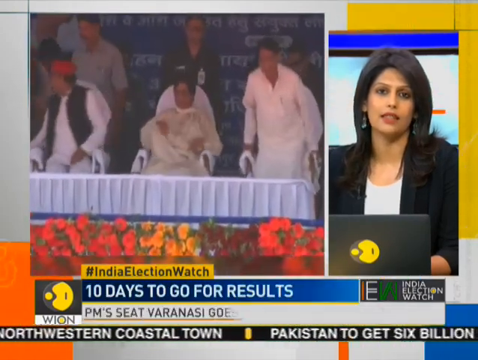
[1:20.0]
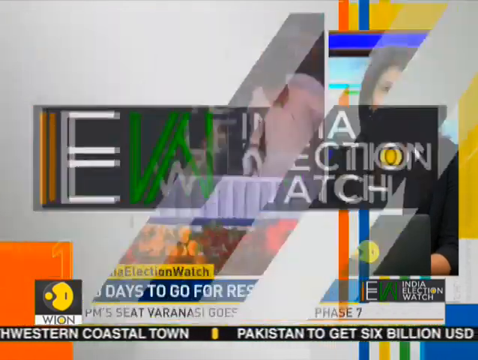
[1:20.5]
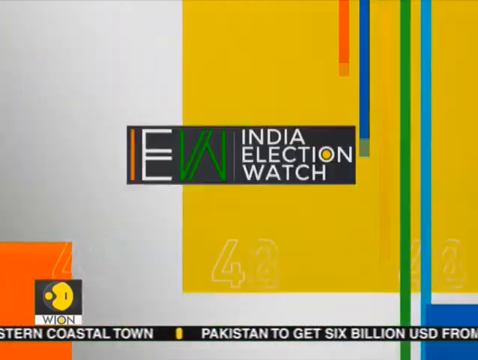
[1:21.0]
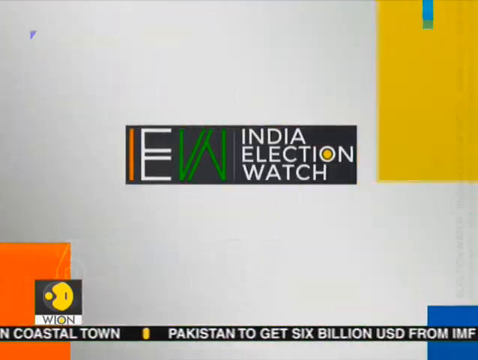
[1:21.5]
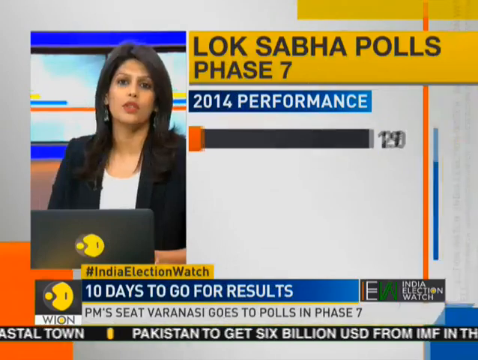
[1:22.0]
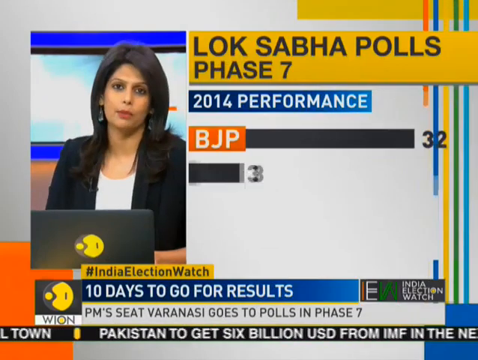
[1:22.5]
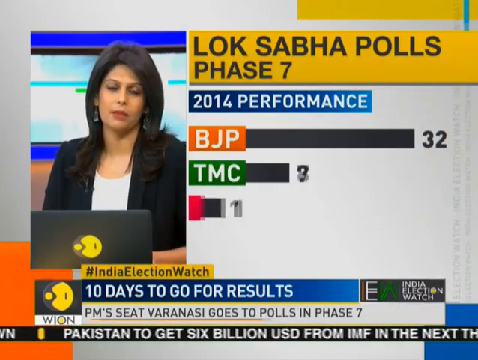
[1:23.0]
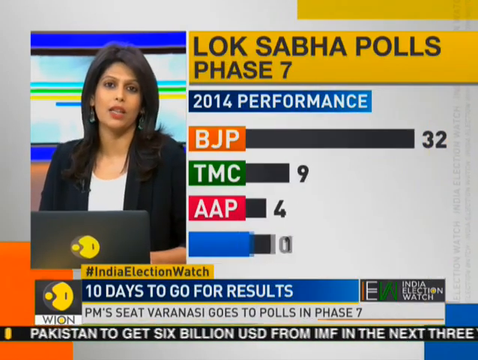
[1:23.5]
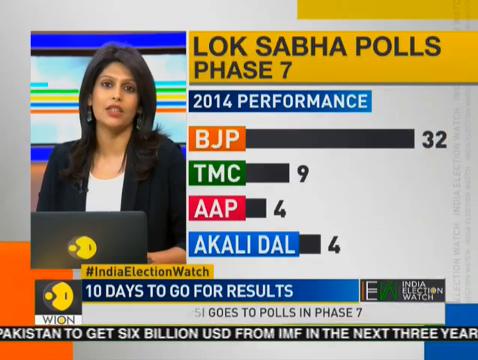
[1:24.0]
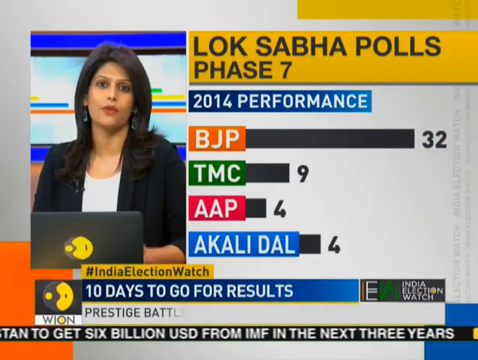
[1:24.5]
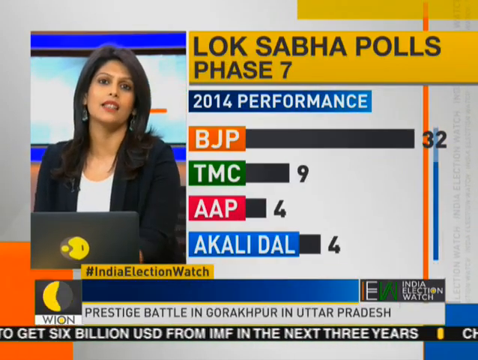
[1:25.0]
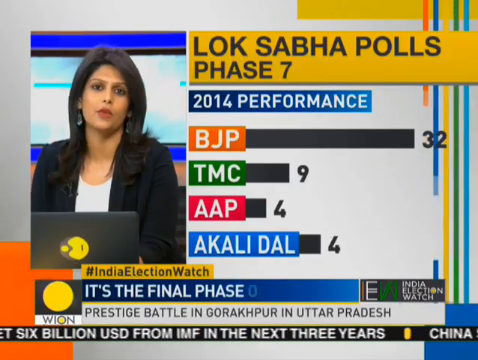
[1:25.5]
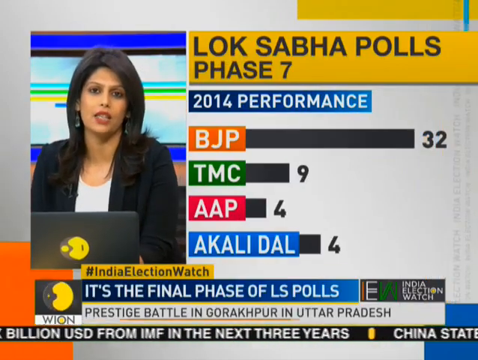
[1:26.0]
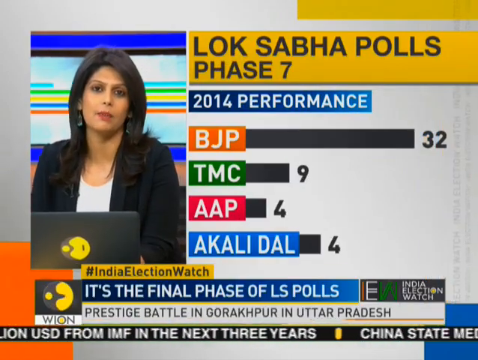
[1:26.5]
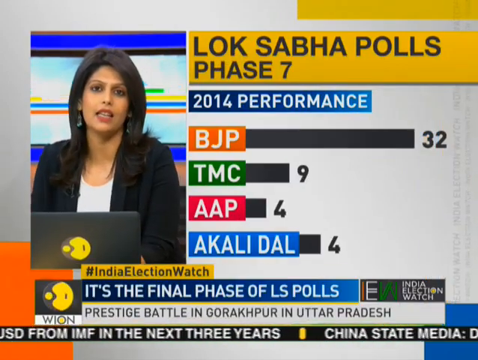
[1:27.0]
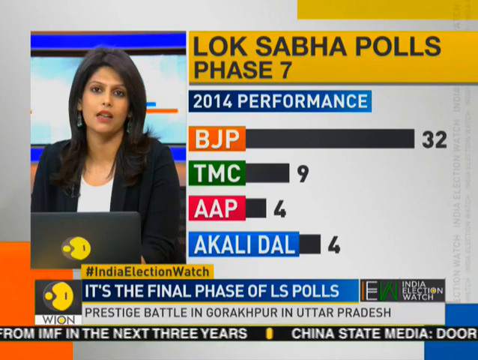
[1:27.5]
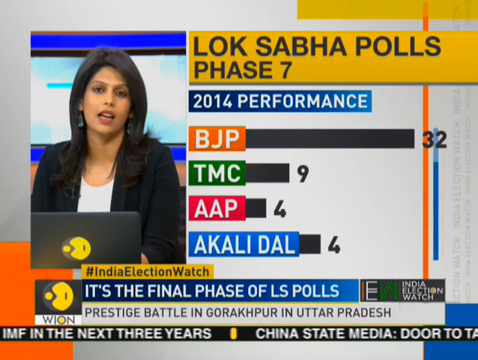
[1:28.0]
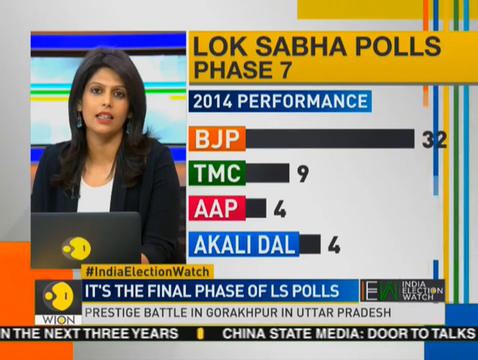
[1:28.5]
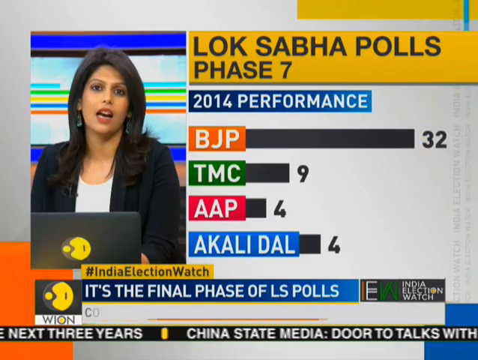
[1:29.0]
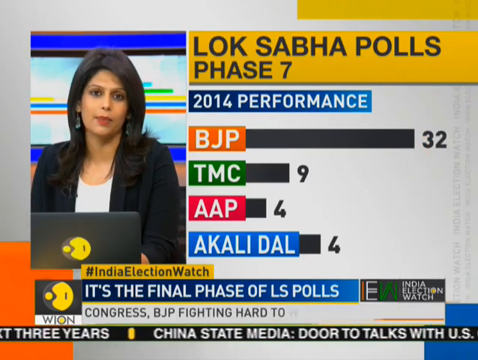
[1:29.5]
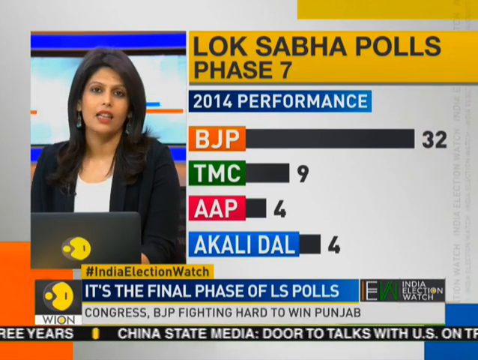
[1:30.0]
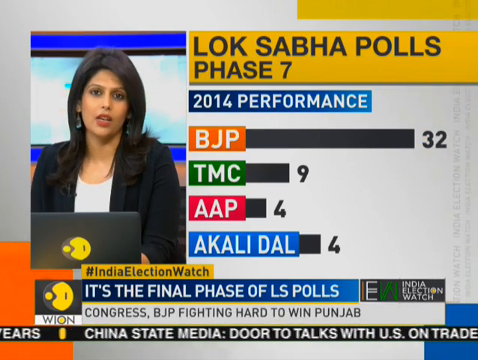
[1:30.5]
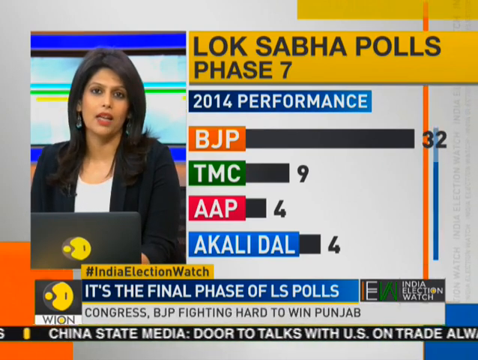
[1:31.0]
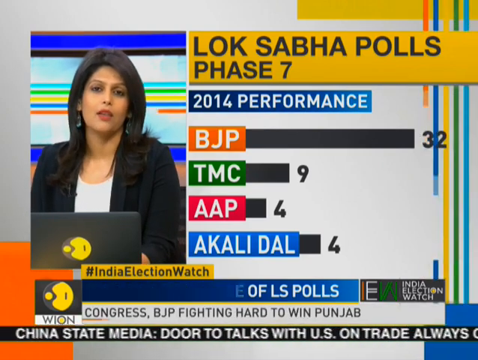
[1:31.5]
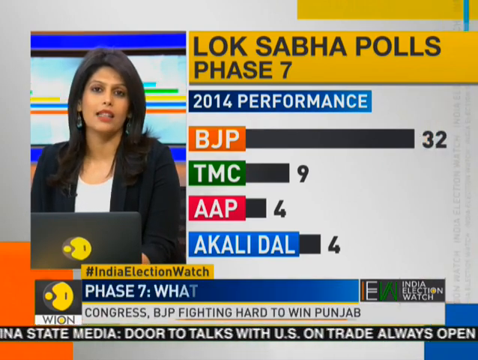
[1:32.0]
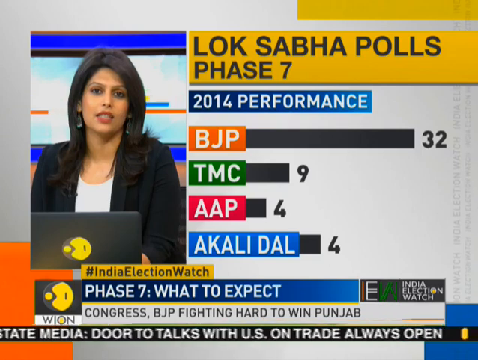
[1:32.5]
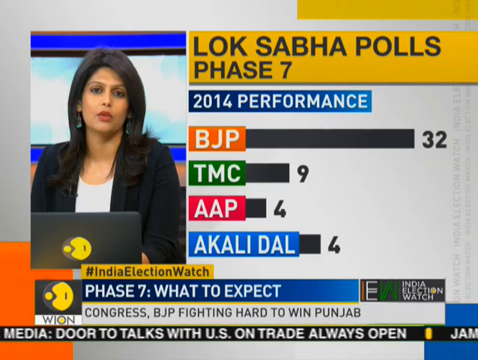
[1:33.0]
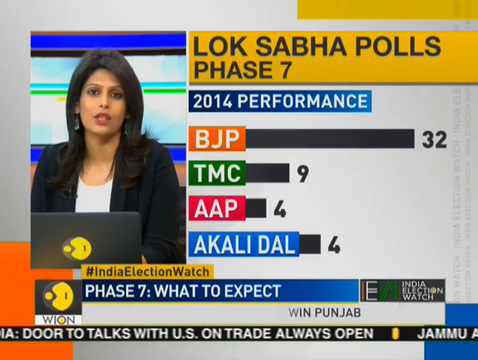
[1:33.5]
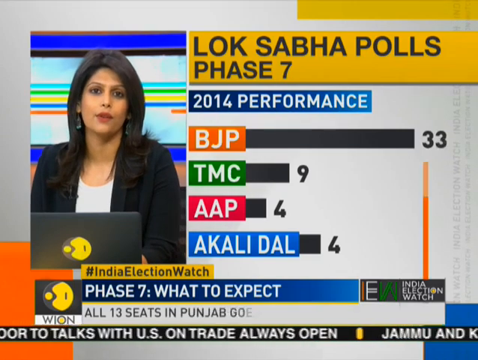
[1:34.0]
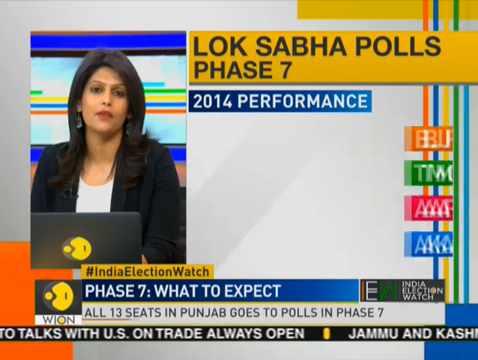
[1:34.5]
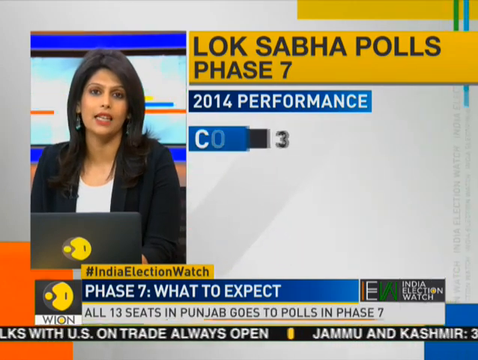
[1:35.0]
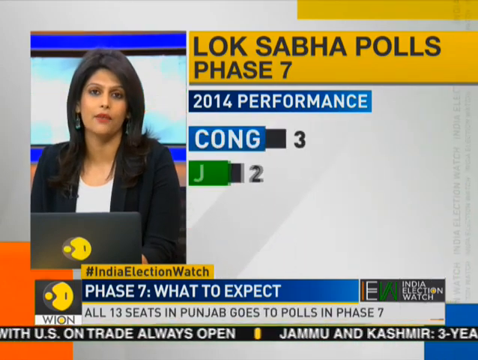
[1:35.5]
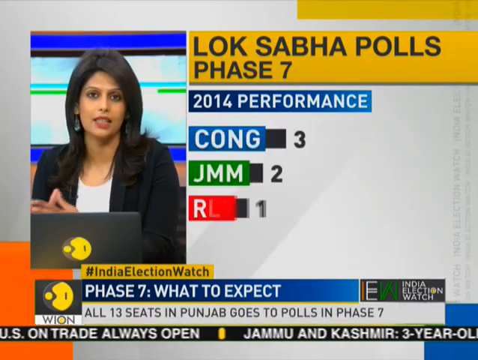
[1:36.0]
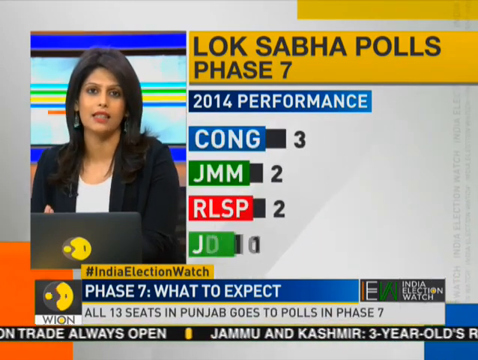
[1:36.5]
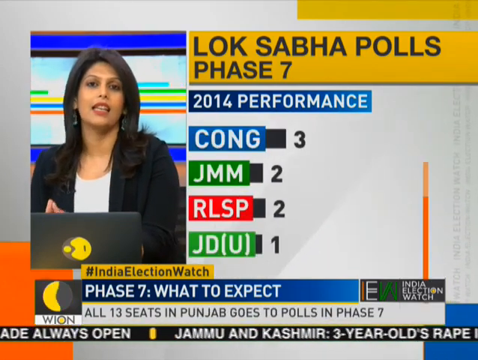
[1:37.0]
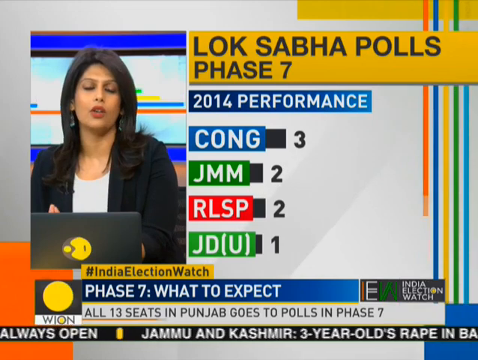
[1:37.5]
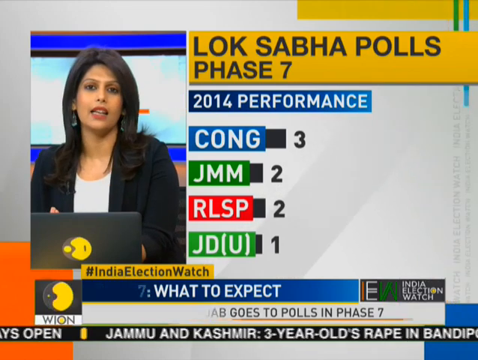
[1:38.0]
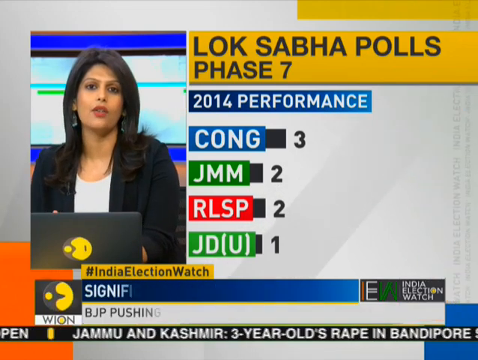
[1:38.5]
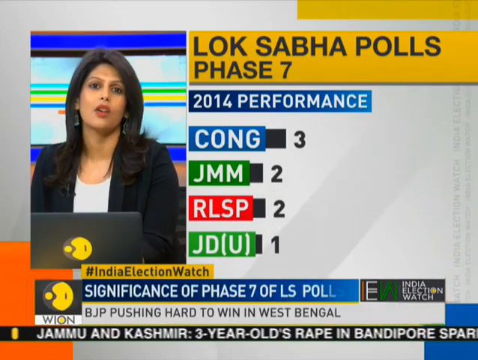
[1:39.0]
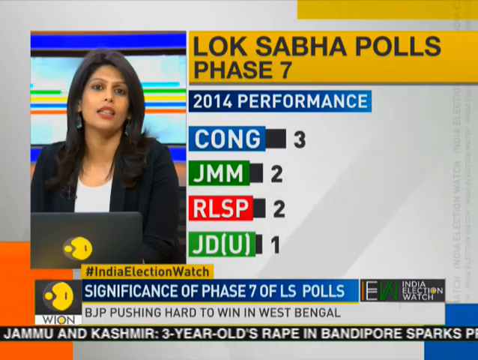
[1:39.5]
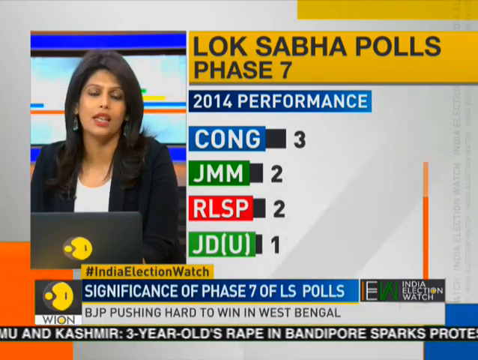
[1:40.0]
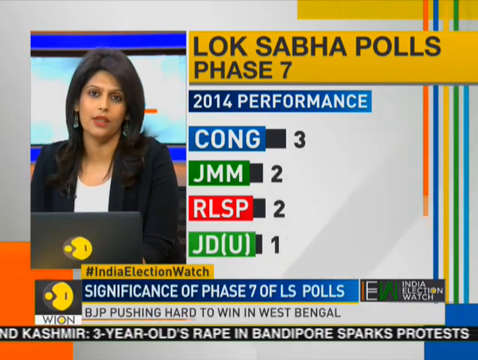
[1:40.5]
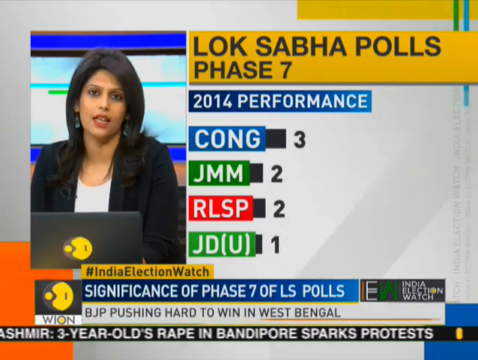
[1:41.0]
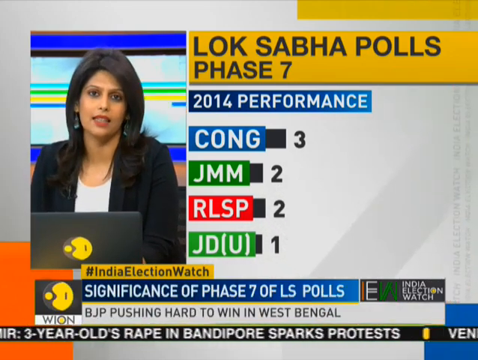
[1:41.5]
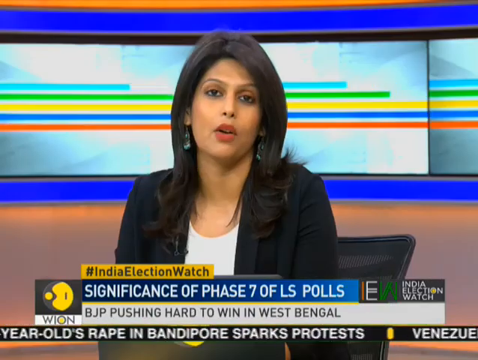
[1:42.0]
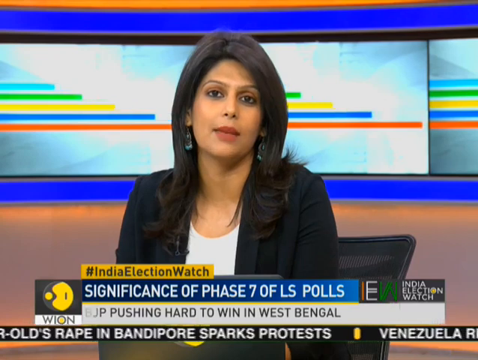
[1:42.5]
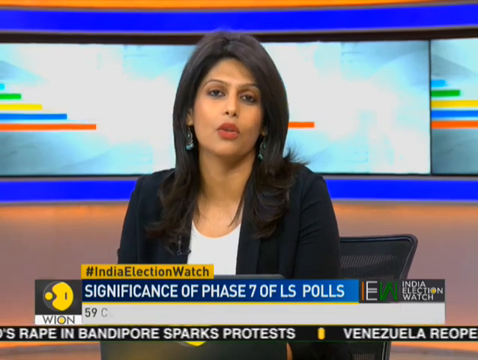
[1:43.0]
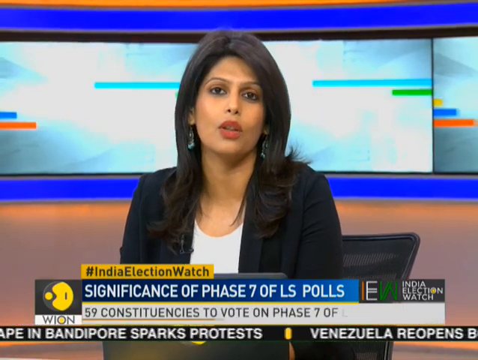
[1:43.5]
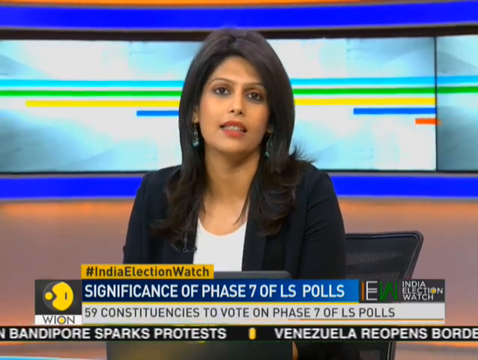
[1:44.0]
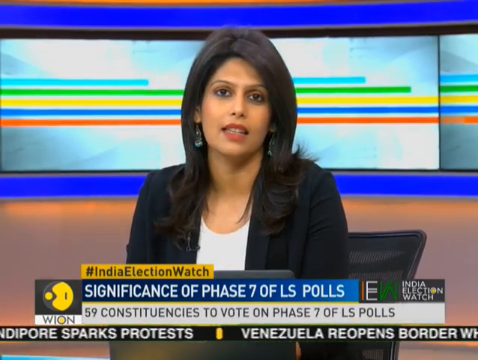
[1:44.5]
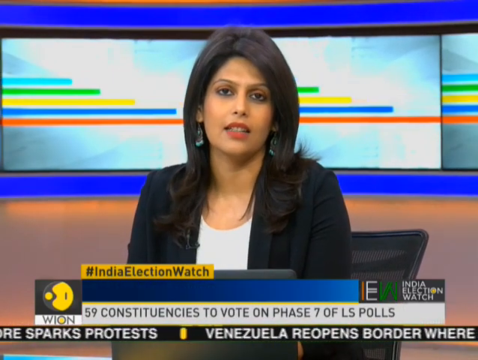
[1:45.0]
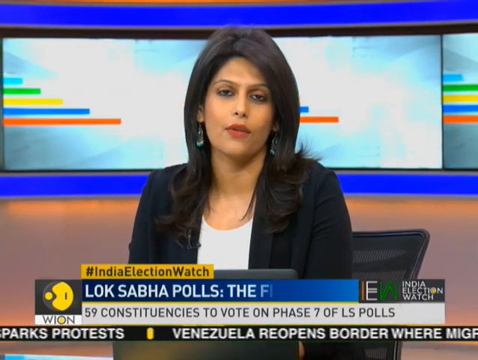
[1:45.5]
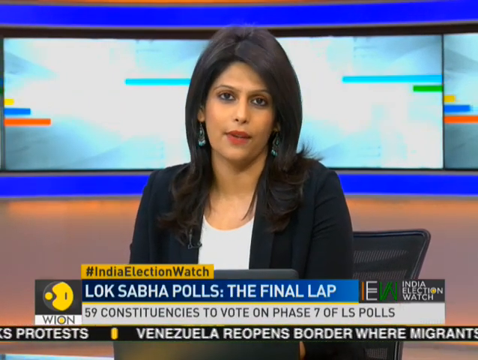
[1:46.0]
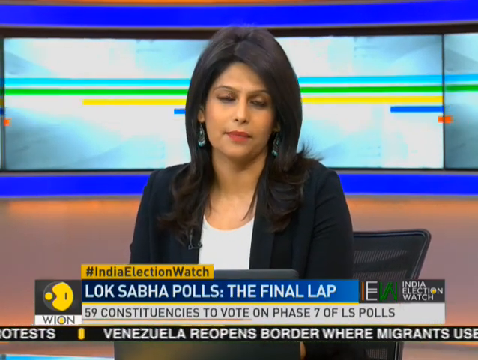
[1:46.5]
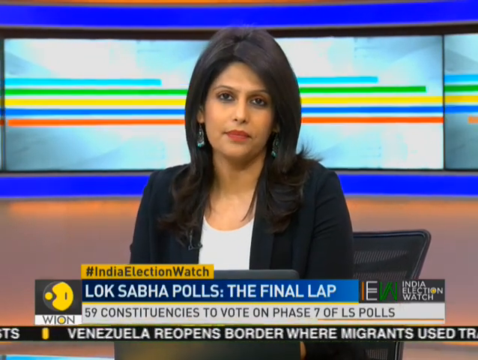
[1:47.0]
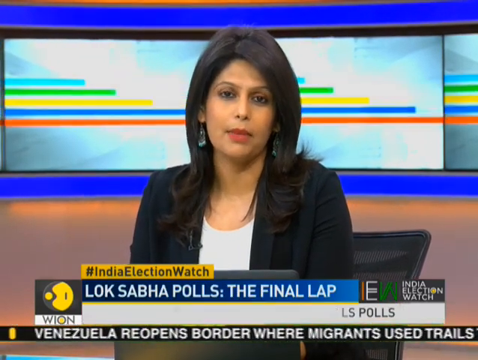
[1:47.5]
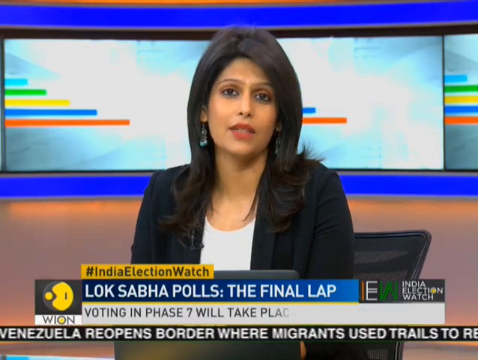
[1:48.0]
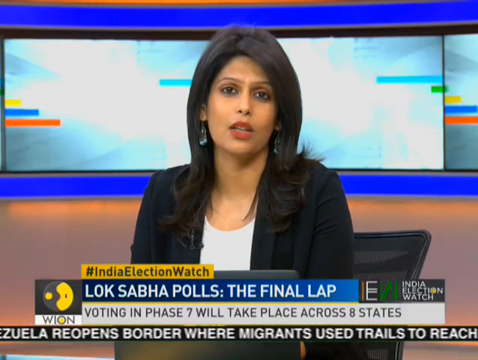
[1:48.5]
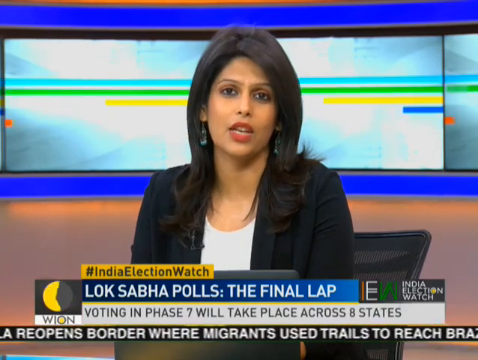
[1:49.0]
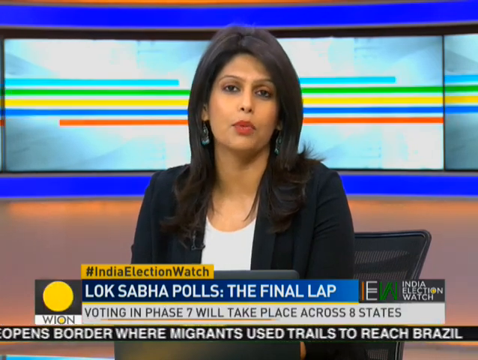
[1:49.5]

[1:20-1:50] The anchor is in the smaller frame on the right side, while the bigger frame shows various videos and scenes. Text at the bottom reads "#Indian election watch," "ten days to go for the results," "PM's seat Varanasi" and "Varanasi goes to polls in phase seven." Leaders are sitting down. The Indian election watch graphic appears, and the anchor shifts from the right side to the left. On the right, displays show "Lok Sabha polls phase seven, 2014 performance," with BJP at 32, TMC at 9, AAP at 4 and Kalidhar at 4. The highlights read "it's the final phase of LS polls, prestige battle in Gorakhpur in Uttar Pradesh," "Congress BJP fighting hard to win Punjab," "Phase 7 what to expect?" and "All 13 seats in Punjab goes to polls in Phase 7." Another display of "Lok Sabha polls Phase 7 2014 performance" shows Kong with 3, JAM with 2, RLSP with 2 and JDU with 1. Text then reads "Significance of Phase 7 of LS polls" and "BJP pushing hard to win in West Bengal." The anchor then fills the entire screen, with the same background and screen behind her, still reading the news and looking into the camera.